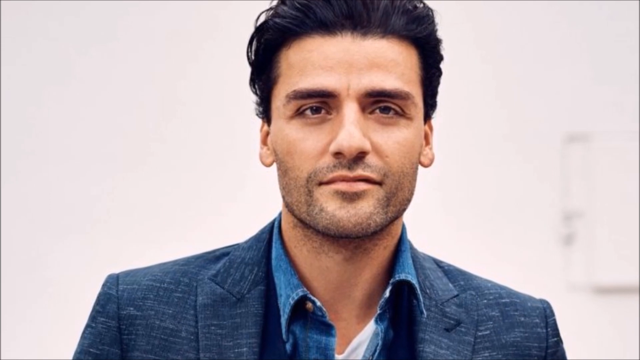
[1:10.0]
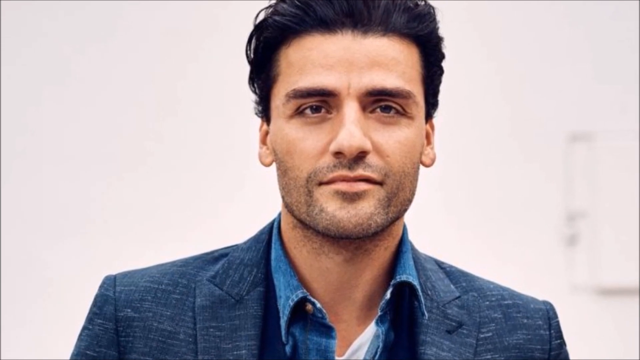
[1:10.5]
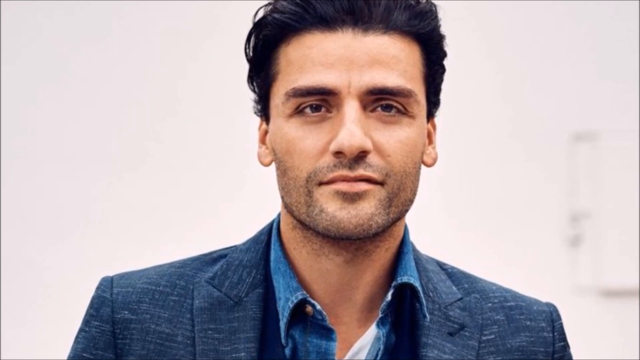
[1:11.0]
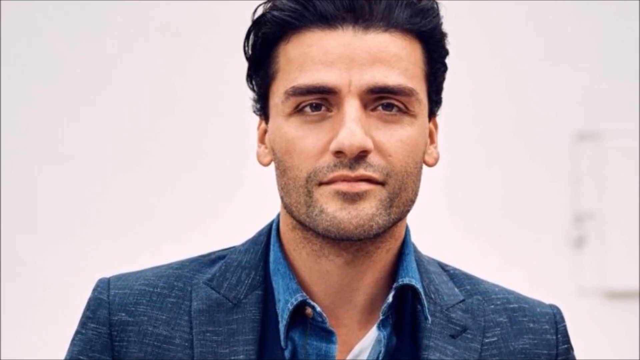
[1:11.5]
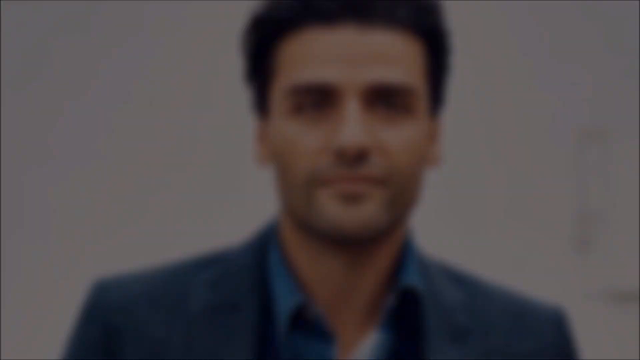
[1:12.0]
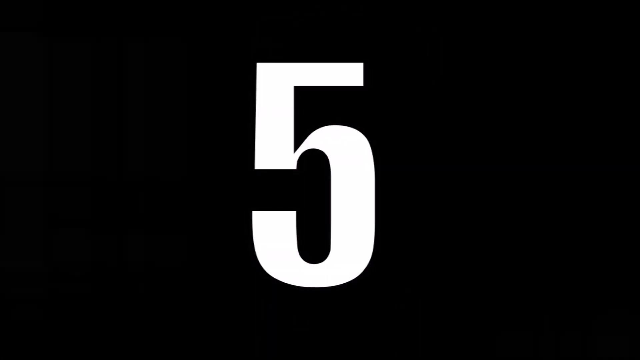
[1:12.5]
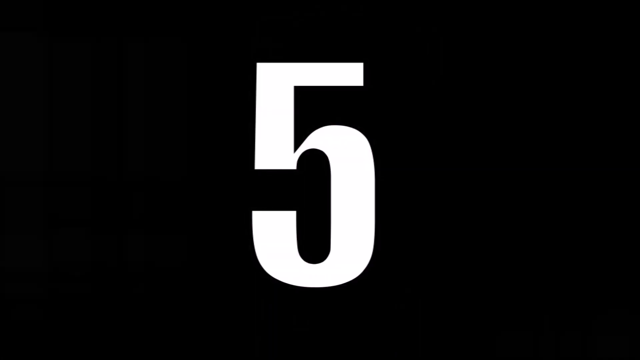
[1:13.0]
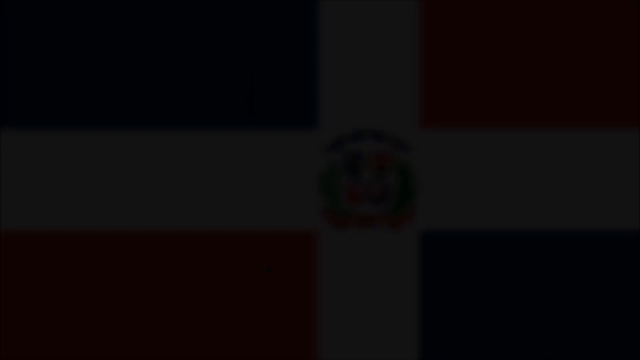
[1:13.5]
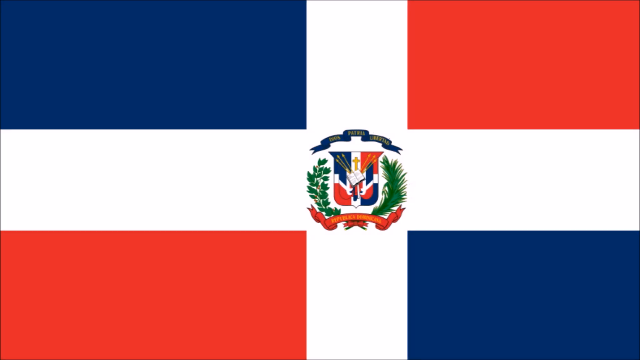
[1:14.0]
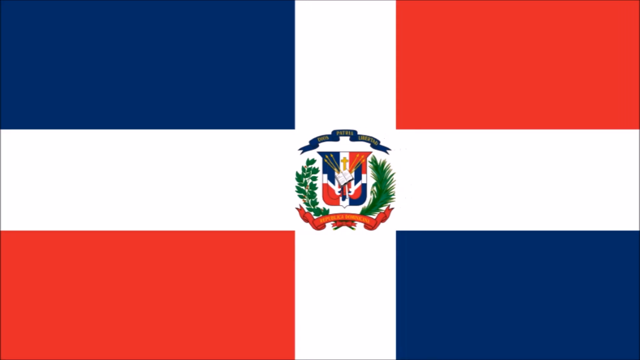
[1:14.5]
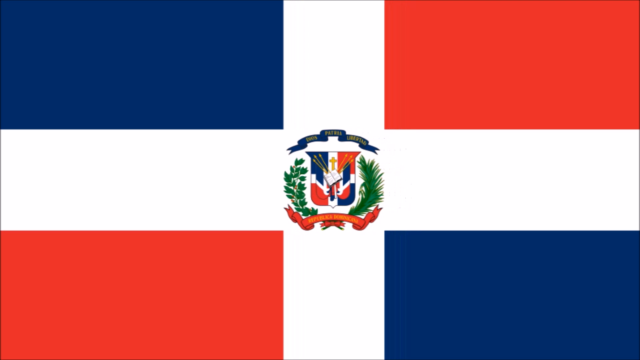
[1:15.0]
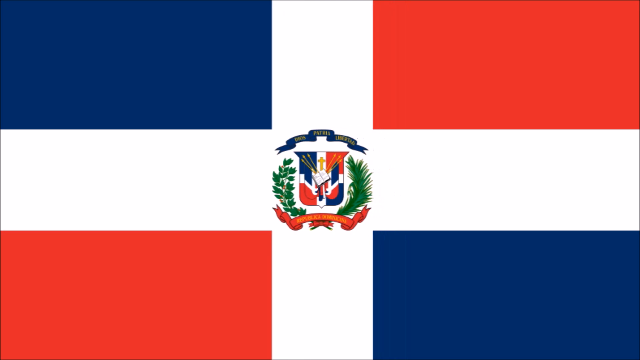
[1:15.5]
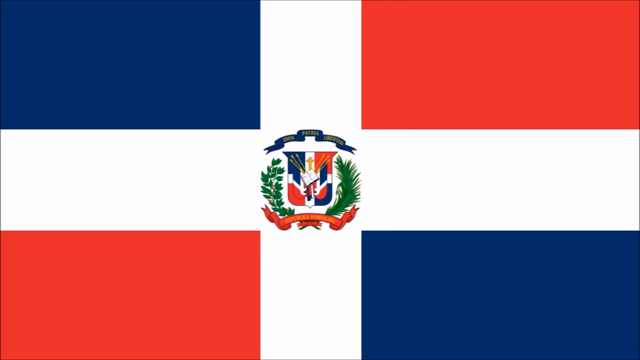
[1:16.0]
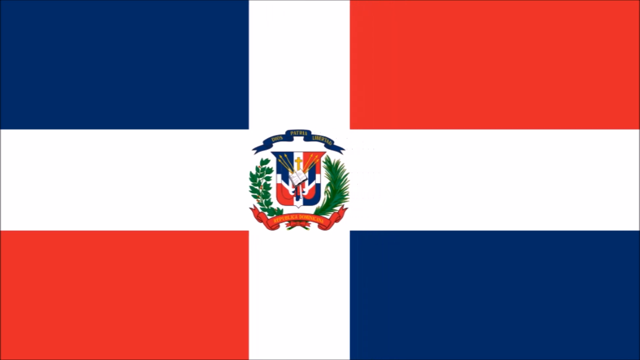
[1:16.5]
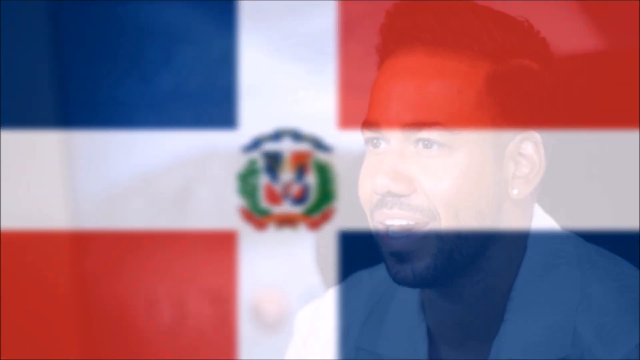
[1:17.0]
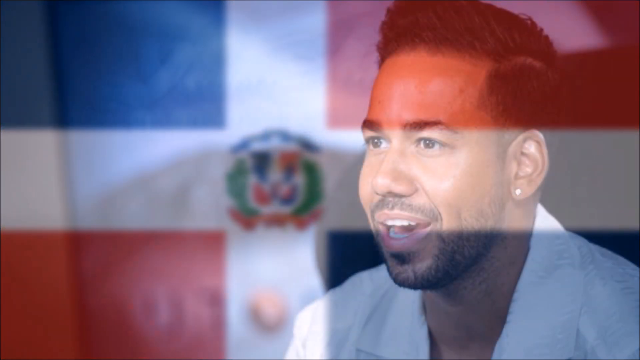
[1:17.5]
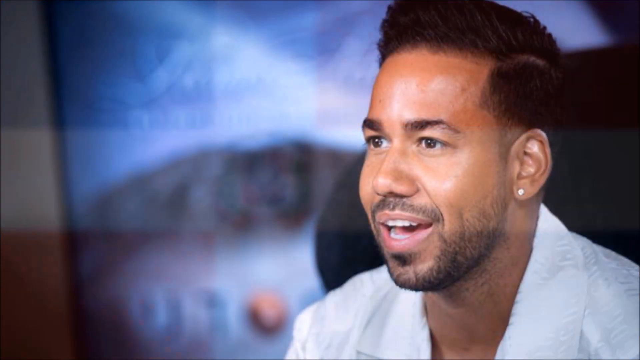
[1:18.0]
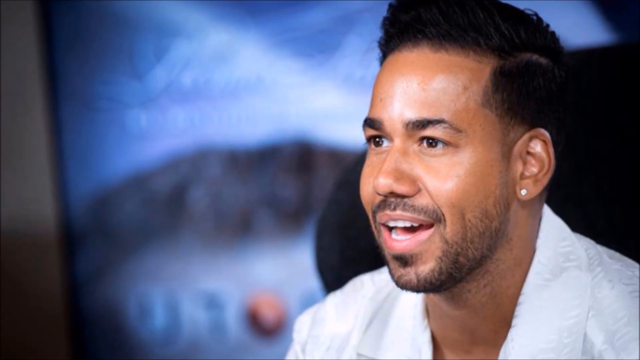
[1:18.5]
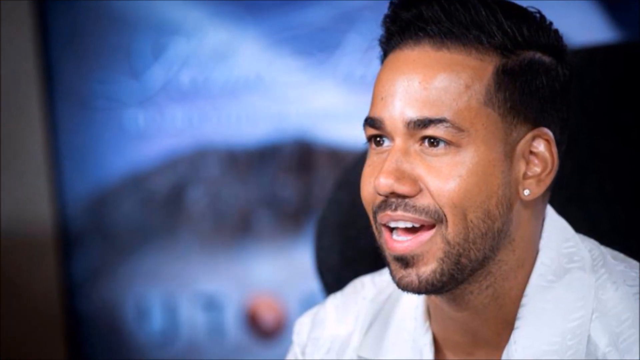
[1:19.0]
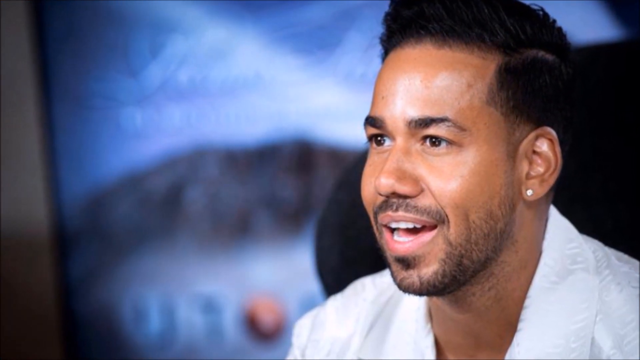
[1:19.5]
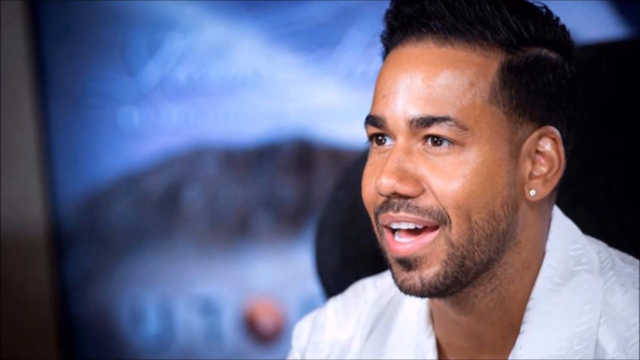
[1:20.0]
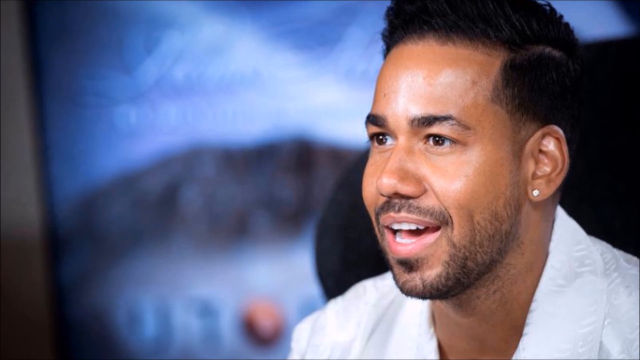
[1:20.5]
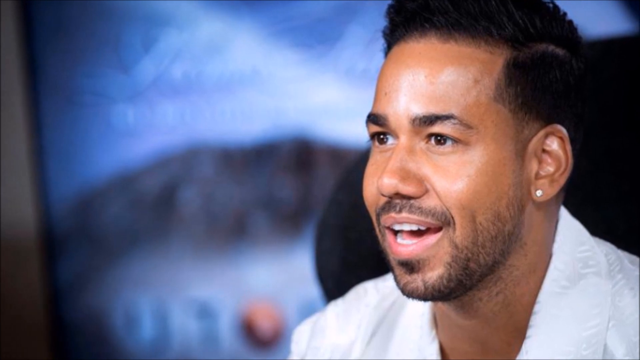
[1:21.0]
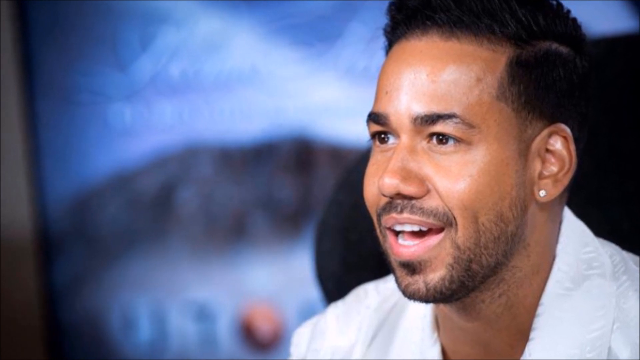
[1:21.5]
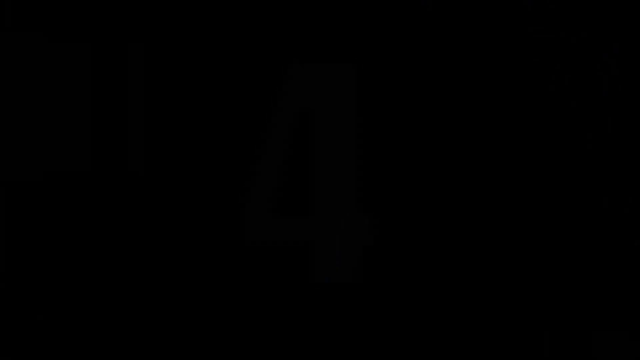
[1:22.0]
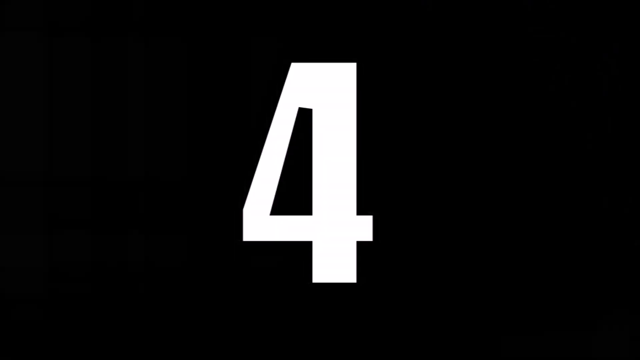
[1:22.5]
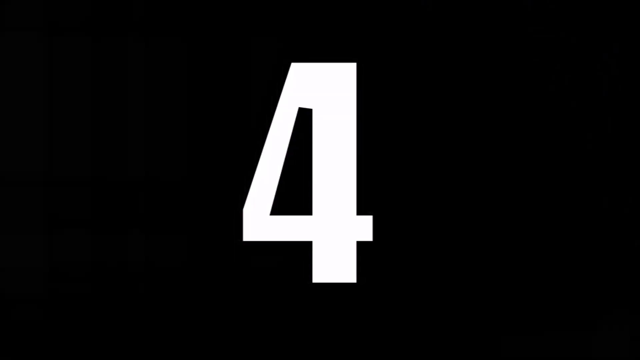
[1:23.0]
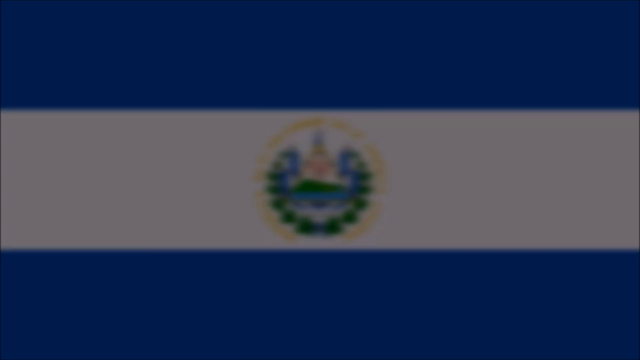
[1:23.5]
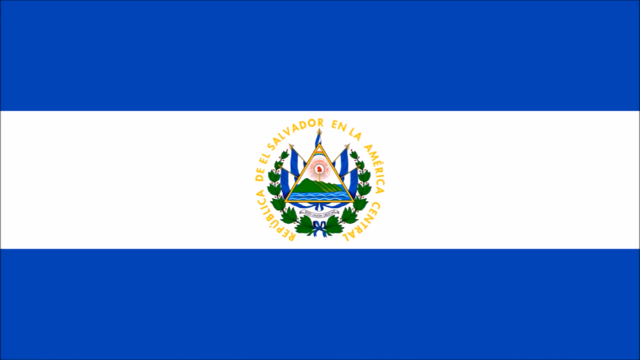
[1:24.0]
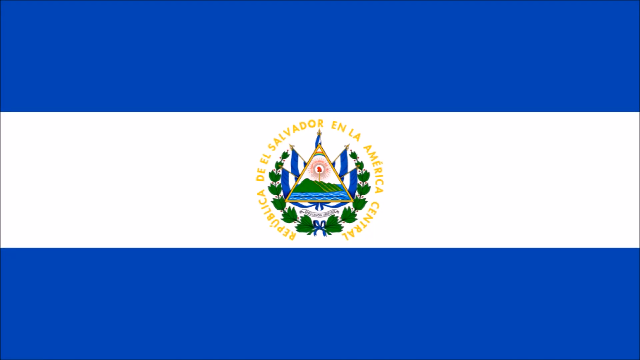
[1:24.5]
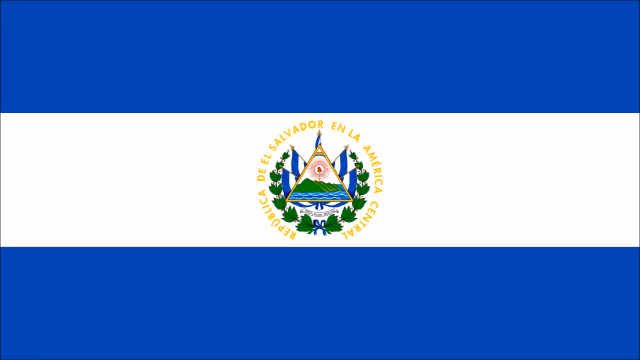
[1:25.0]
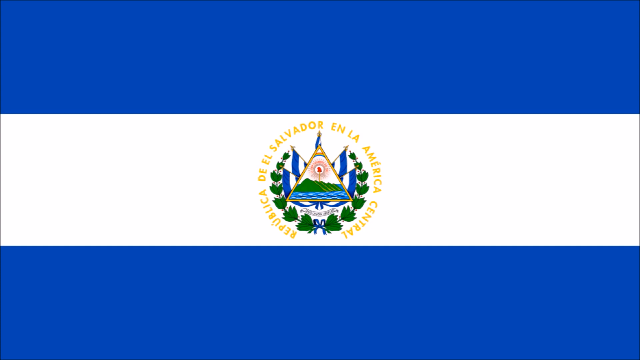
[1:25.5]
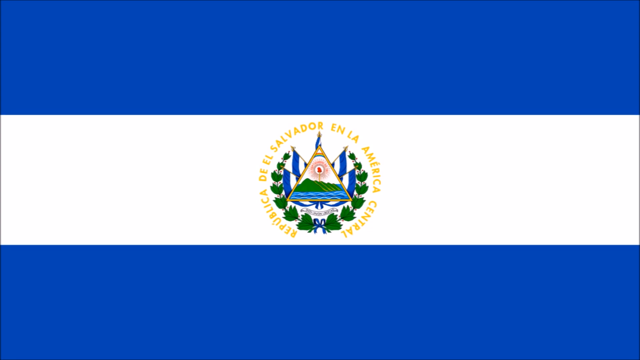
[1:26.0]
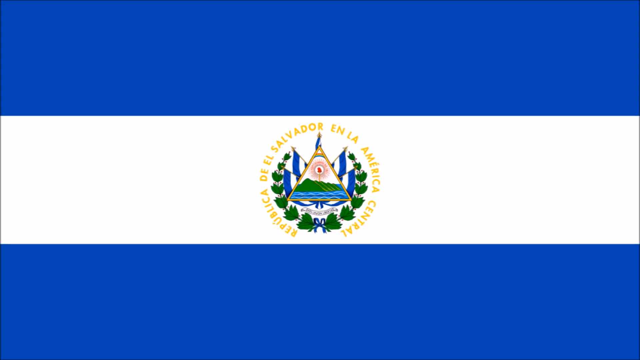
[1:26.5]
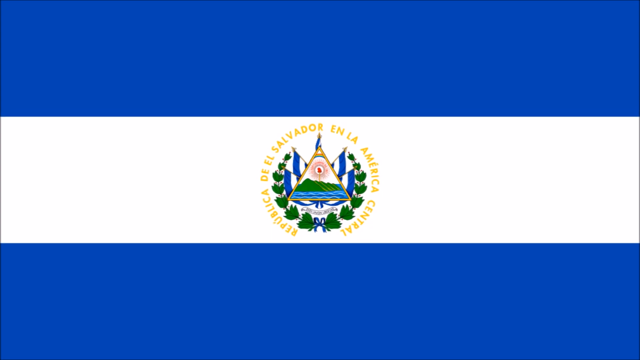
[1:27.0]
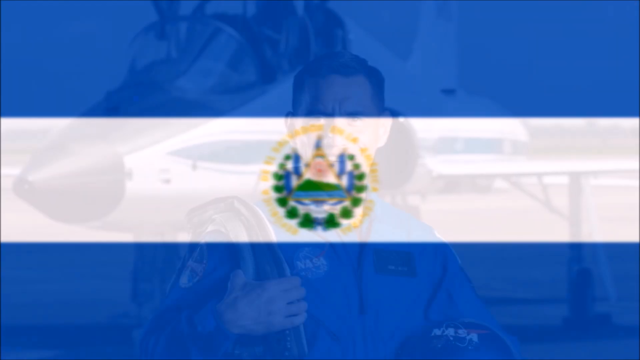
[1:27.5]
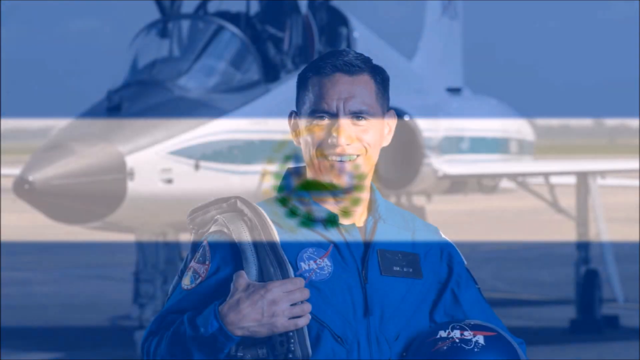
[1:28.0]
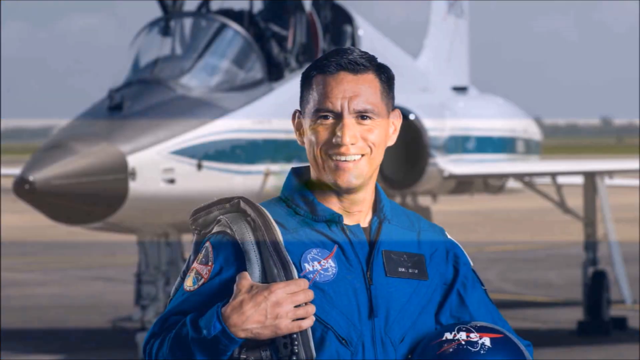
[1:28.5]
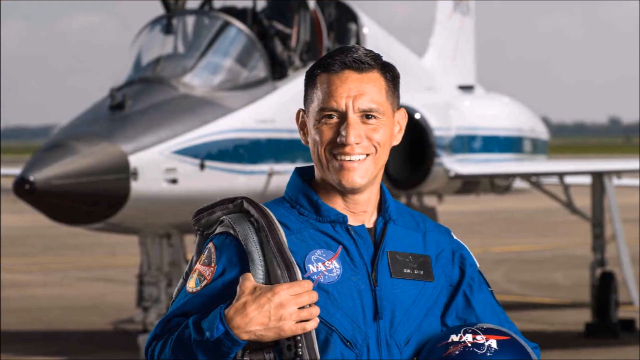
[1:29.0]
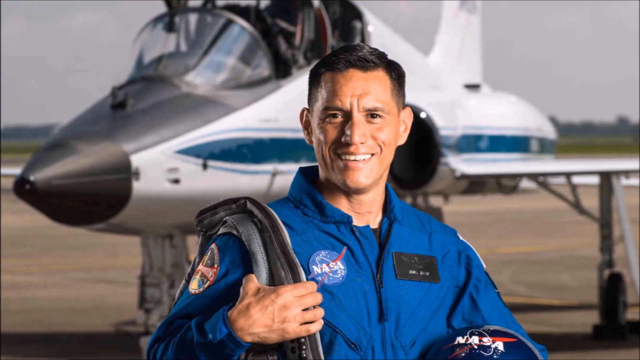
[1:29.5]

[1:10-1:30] A photograph shows a man looking straight ahead. He has black hair, light brown eyes and a very thin beard and mustache that looks more like five o'clock shadow than a real beard, and he wears a blue jacket over what looks like a denim shirt. His image fades and the number 5 appears against a black background. The image changes to a national flag with a white cross, blue squares in the upper left and lower right corners, red squares in the upper right and lower left corners, and a central emblem that looks like branches of plants surrounding a shield with the same blue, white and red design in its center. Next is a photograph of a man with light brown skin and black hair looking off to the side, seen slightly in profile, with a diamond stud earring in his left ear and a white jacket. The number 4 follows against a black background, then the national flag of El Salvador: a blue bar at the top and bottom, a white bar in the center, and a central emblem that mentions the name of the country around a design that looks like a triangle containing a scene from nature.